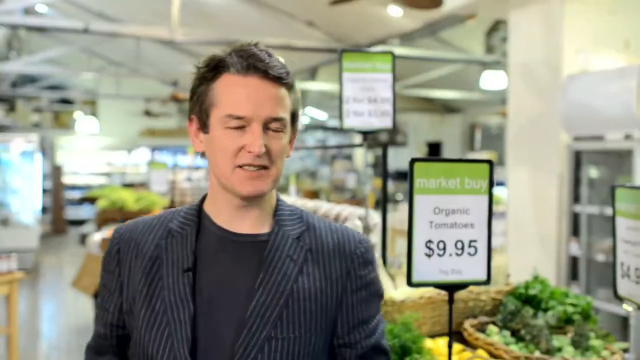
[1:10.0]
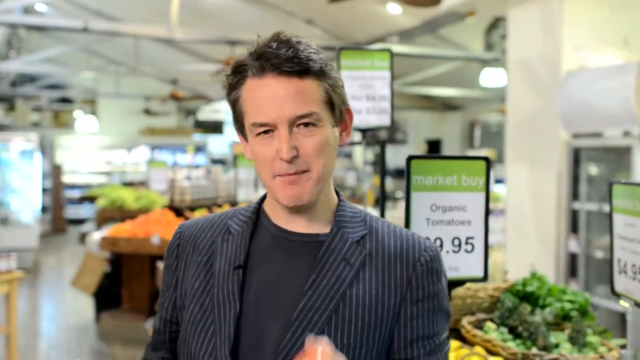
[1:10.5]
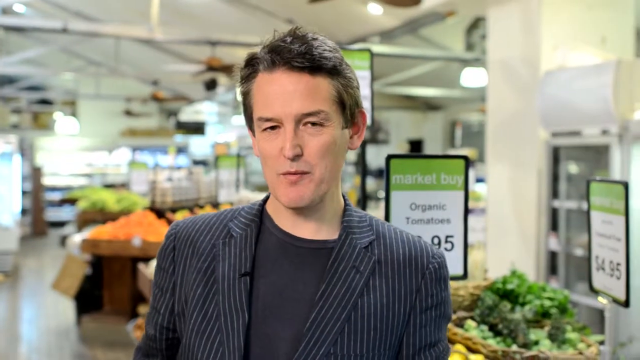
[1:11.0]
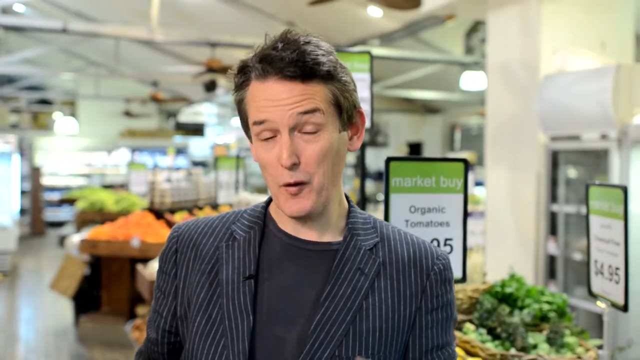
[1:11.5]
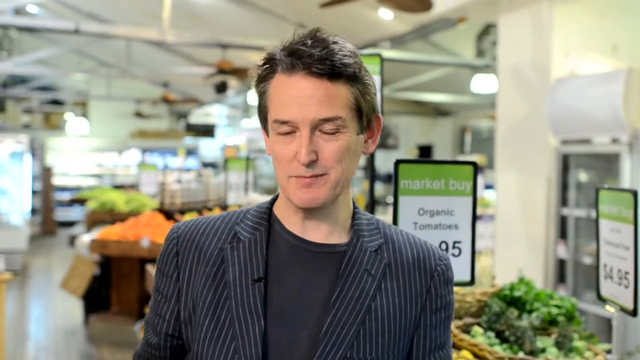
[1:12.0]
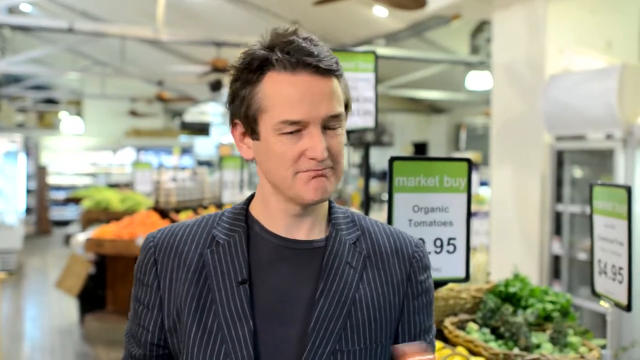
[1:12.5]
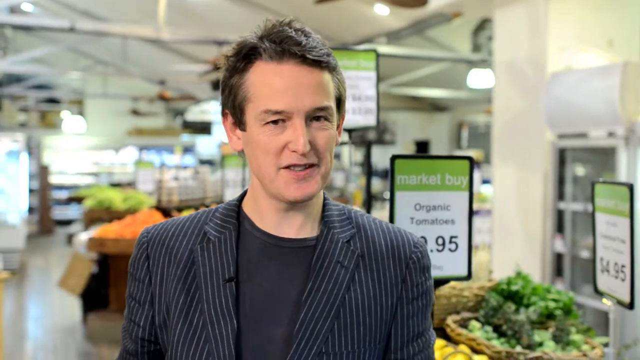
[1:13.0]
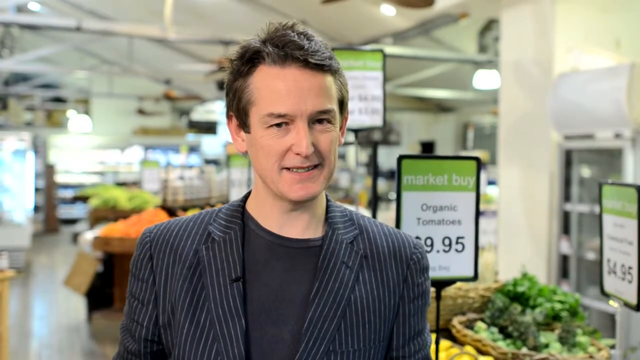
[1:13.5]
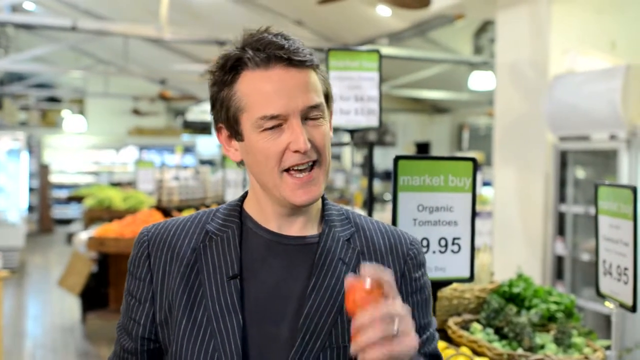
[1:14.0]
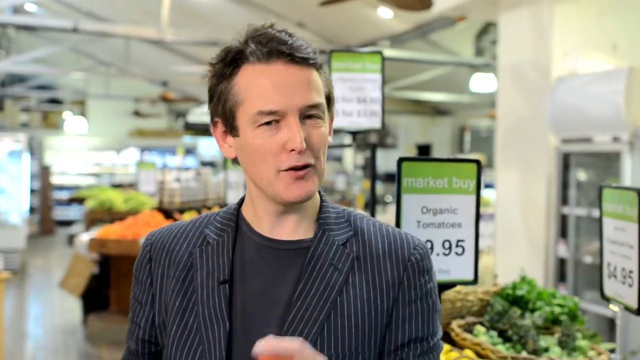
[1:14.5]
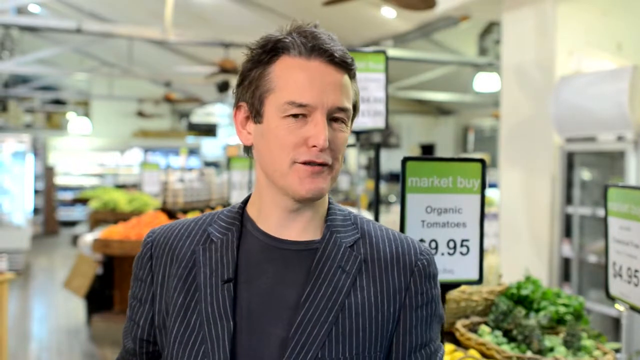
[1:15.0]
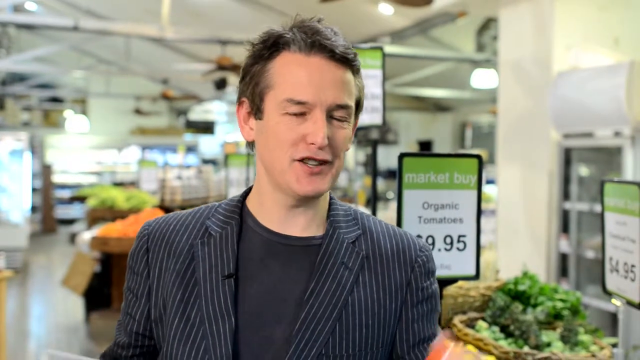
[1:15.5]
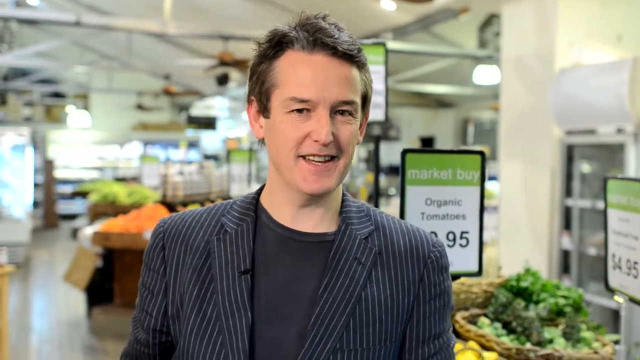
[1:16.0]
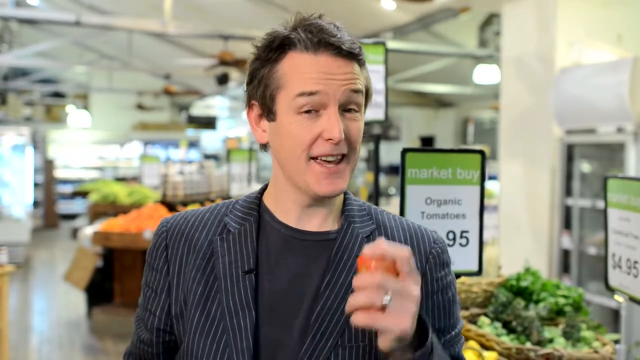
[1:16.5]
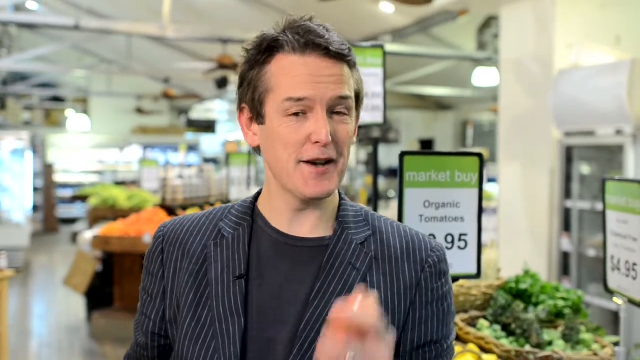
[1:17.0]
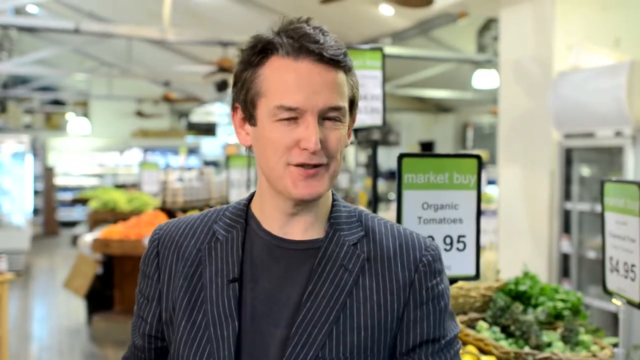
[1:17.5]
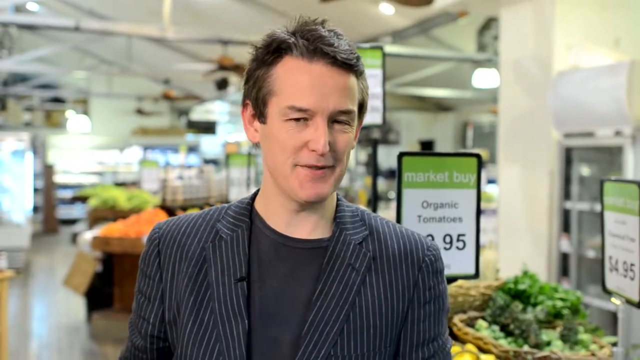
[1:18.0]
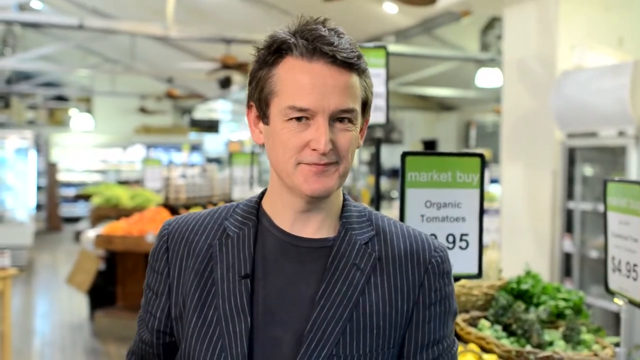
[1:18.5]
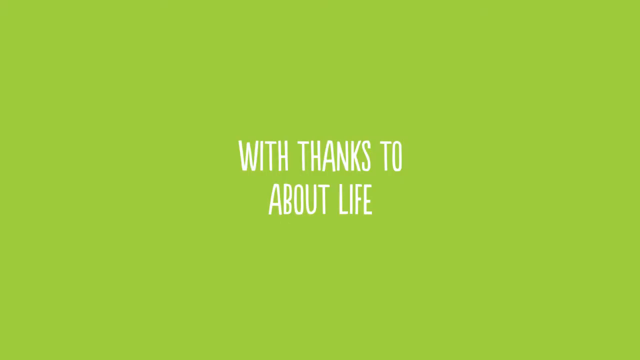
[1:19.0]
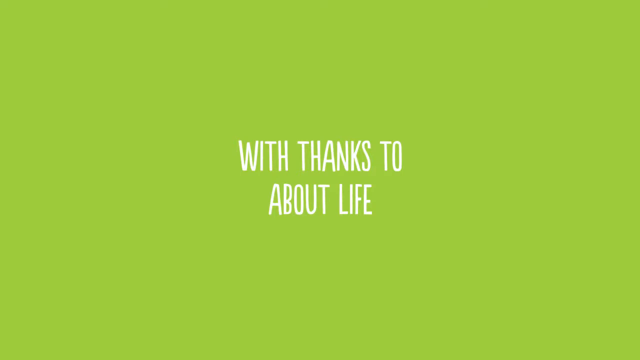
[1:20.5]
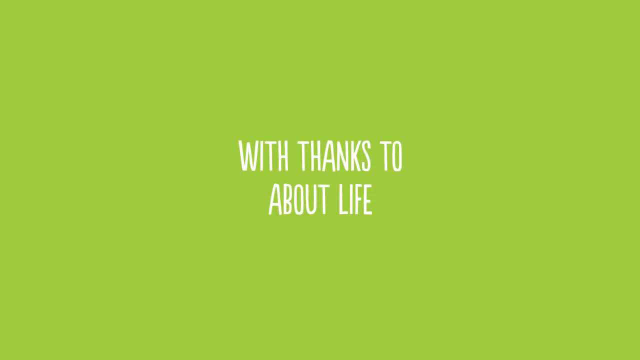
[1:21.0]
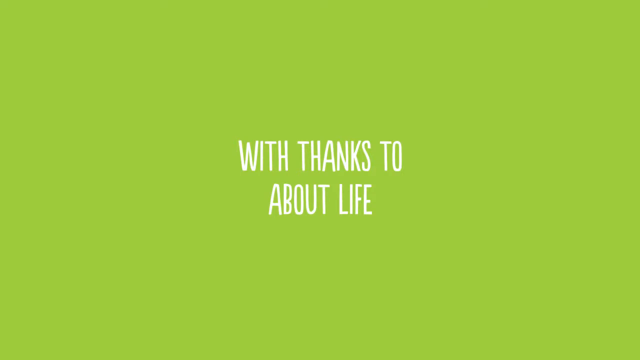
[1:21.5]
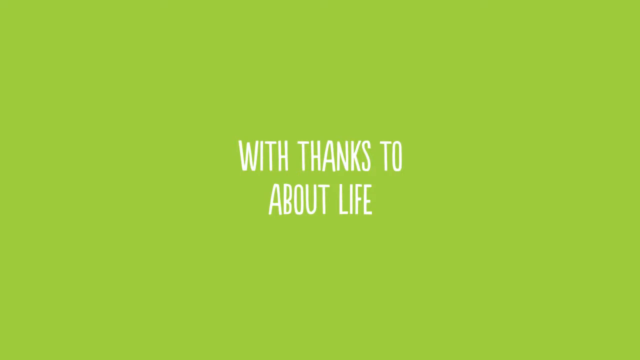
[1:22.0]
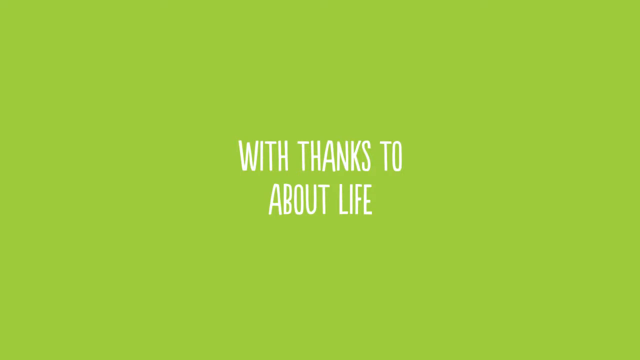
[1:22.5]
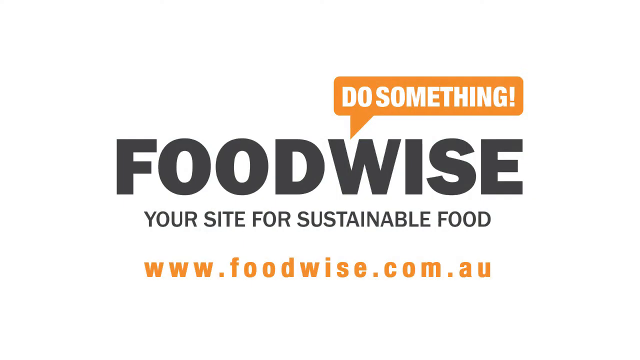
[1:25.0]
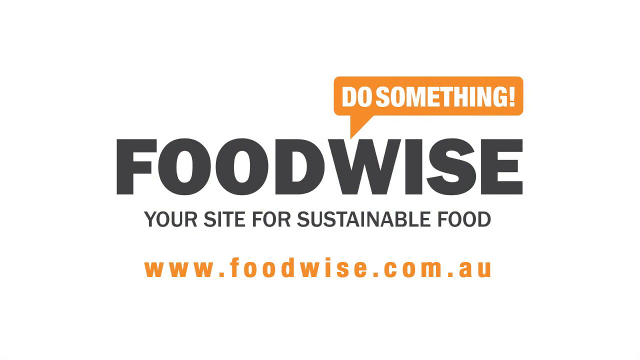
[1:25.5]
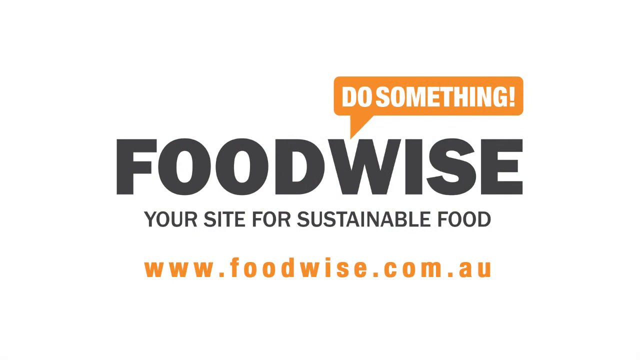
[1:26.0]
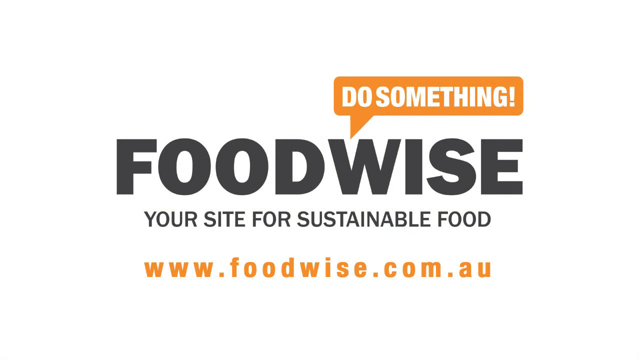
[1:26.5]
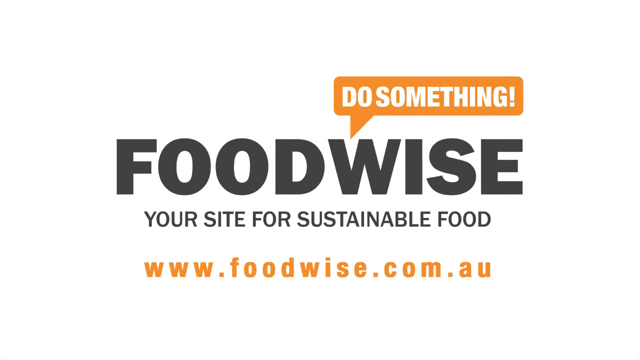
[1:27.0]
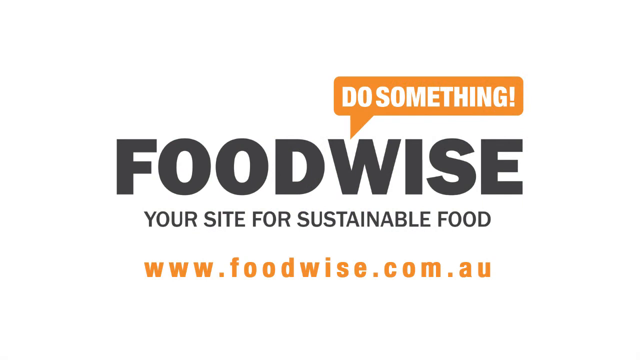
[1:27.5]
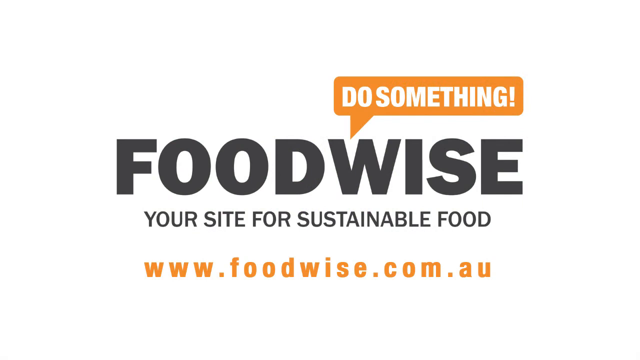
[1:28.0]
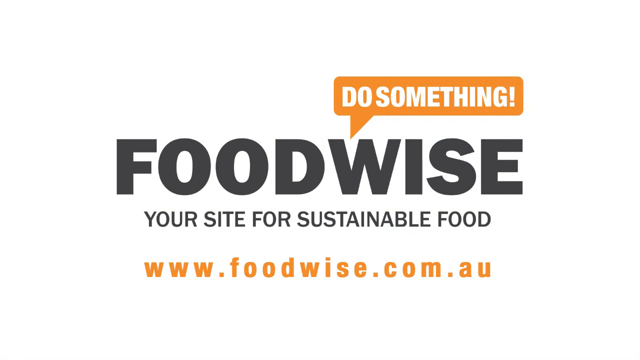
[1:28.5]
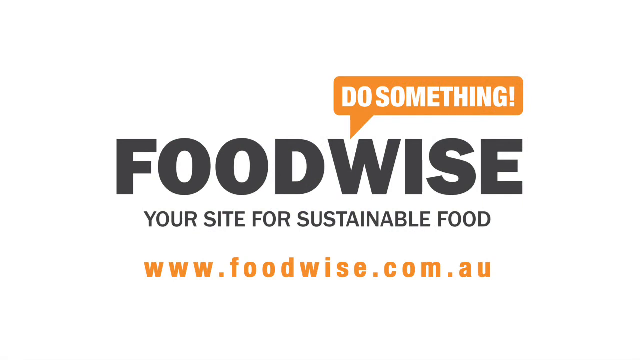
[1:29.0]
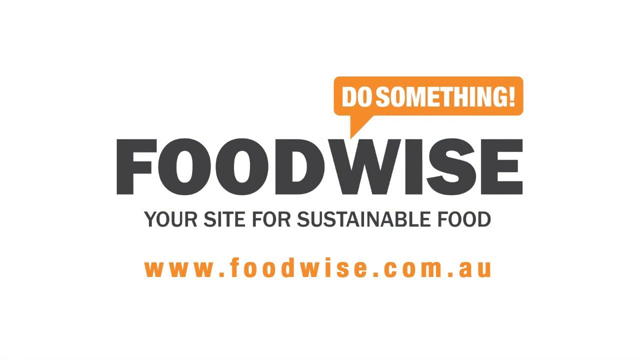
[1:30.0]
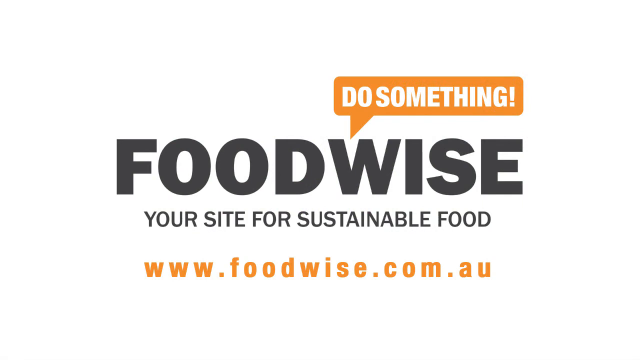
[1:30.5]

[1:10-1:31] The host wears a blazer with black and white vertical stripes and a black shirt, and talks directly to the camera. Behind him are various signs for the products on display; the most visible says "Market Buy Organic Tomatoes $9.95", with "Organic Tomatoes $9.95" written in black over a white background. The host makes motions at the camera with his left hand, holding a tomato in his left hand as he points to the camera. The screen then transitions to a lime green background where white words fade in, arranged in two lines. The screen then transitions to the end slide, which says "do something food wise".